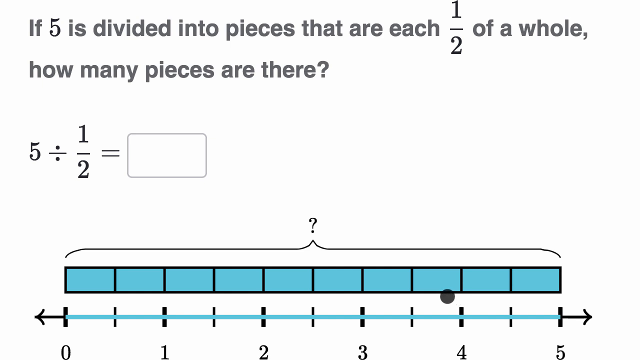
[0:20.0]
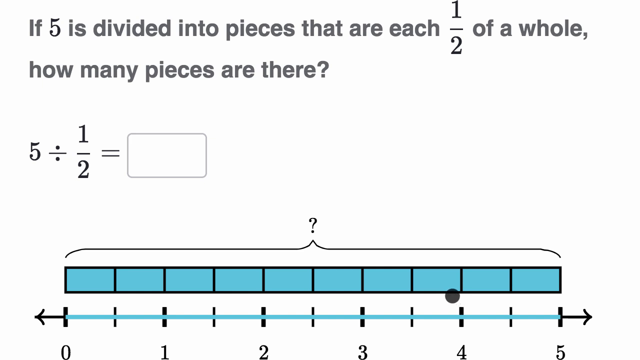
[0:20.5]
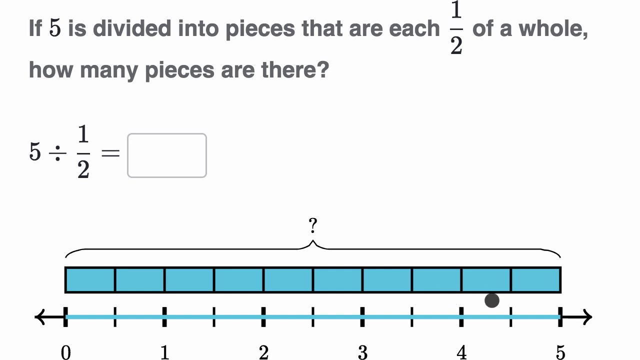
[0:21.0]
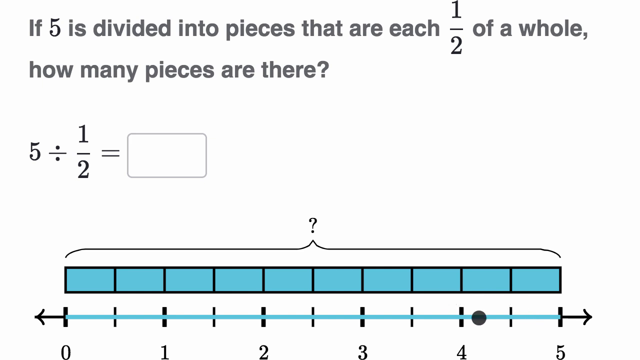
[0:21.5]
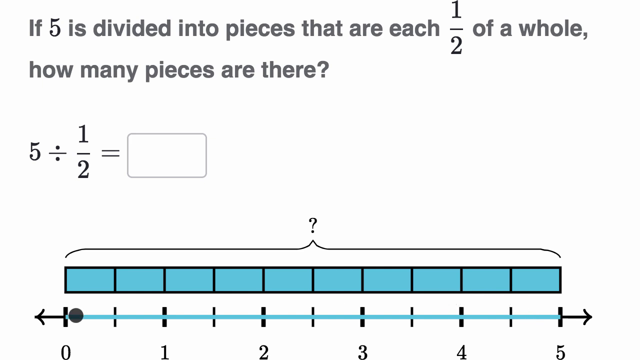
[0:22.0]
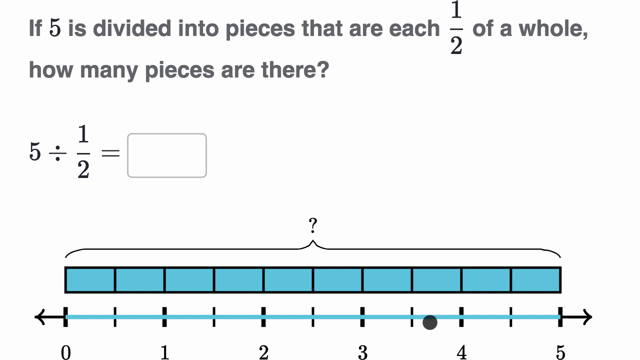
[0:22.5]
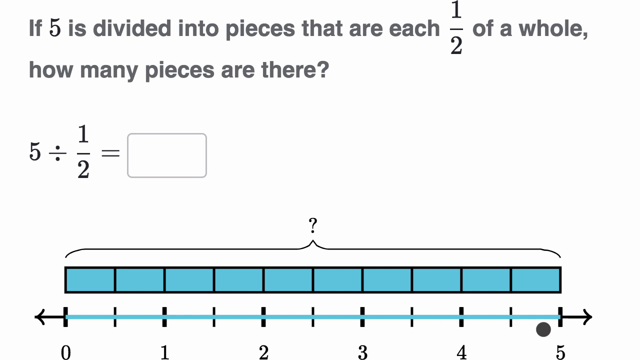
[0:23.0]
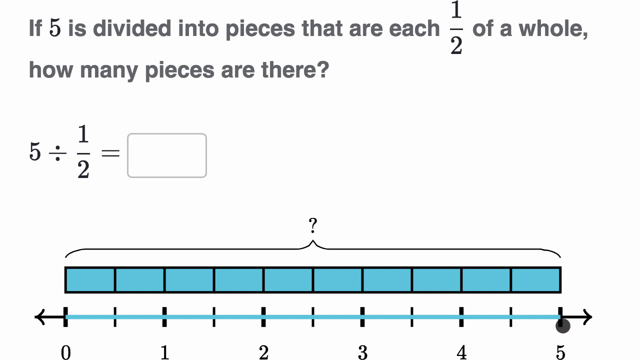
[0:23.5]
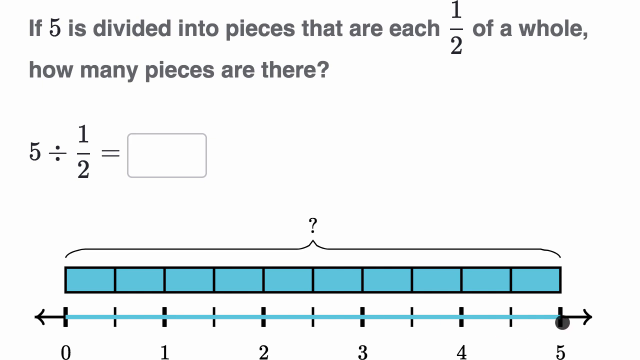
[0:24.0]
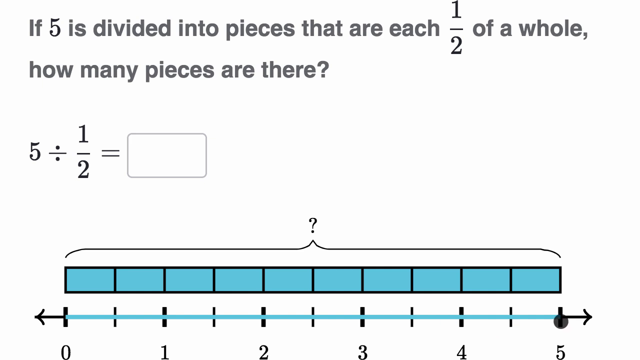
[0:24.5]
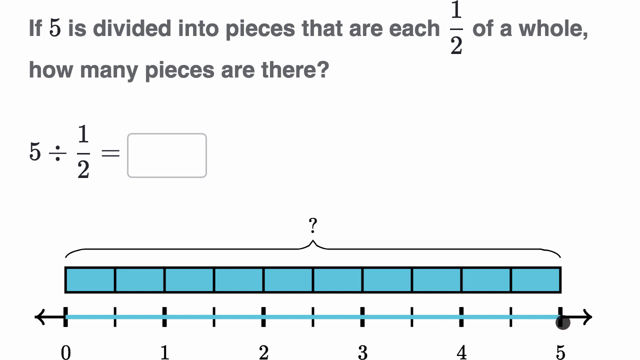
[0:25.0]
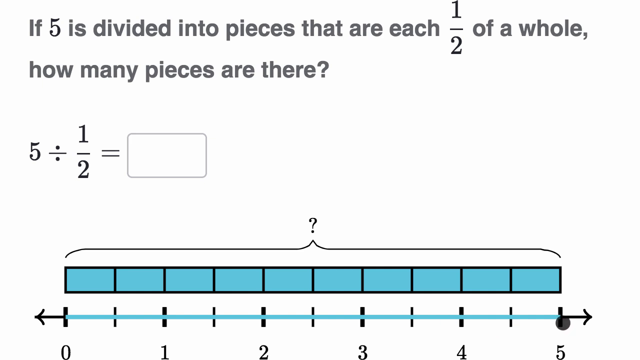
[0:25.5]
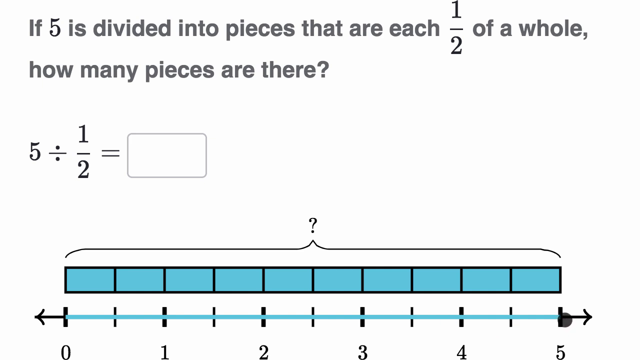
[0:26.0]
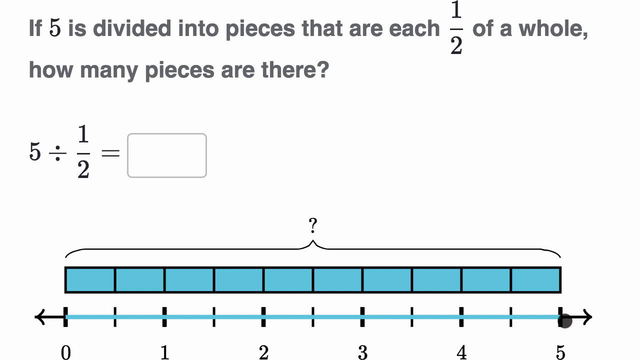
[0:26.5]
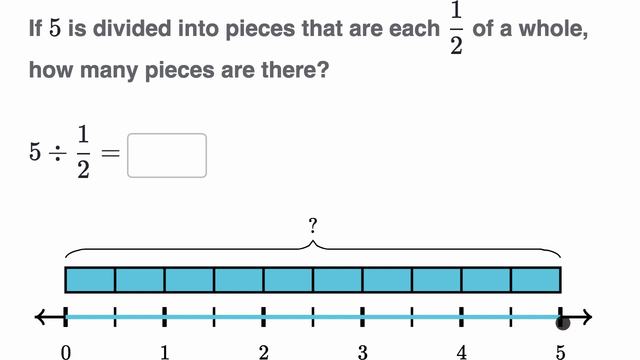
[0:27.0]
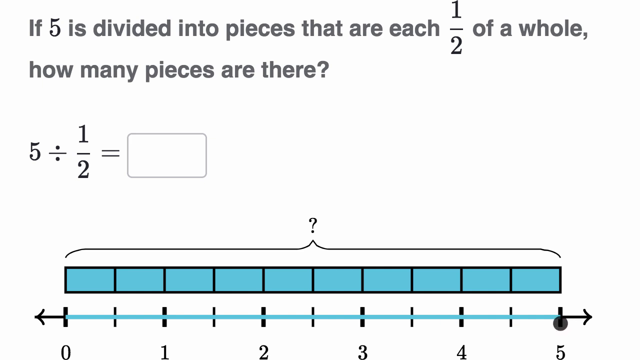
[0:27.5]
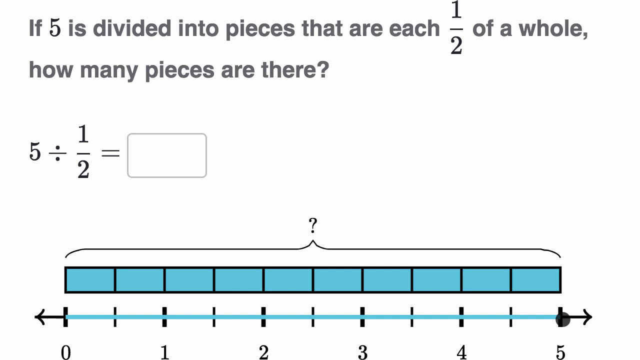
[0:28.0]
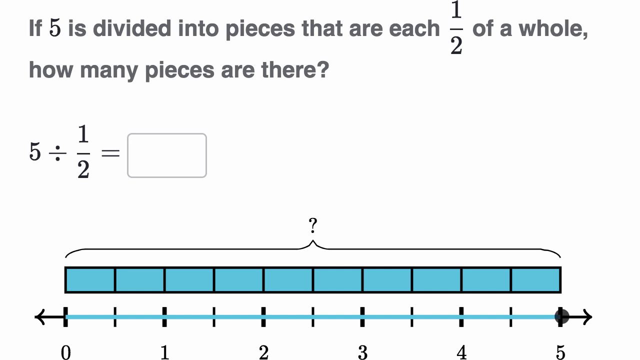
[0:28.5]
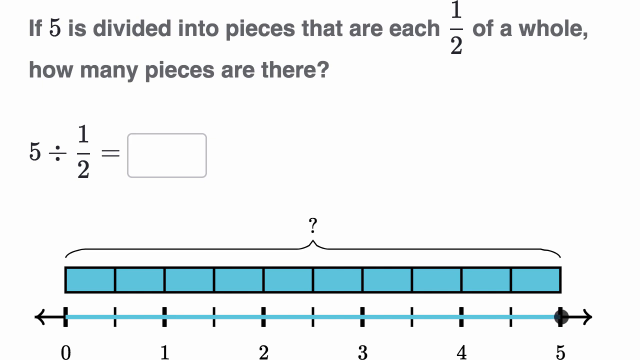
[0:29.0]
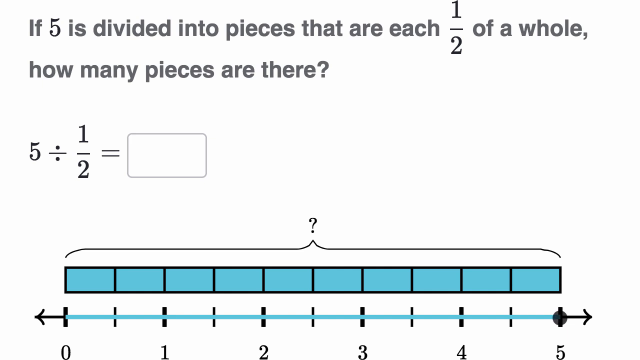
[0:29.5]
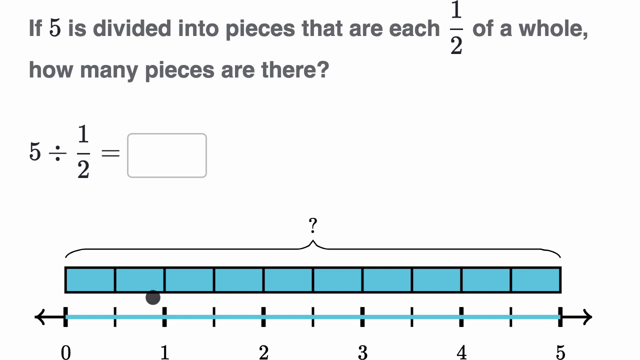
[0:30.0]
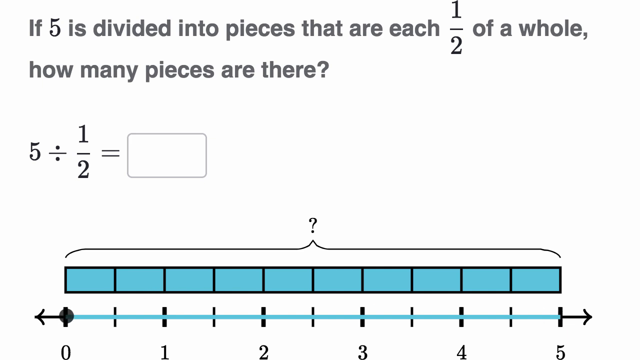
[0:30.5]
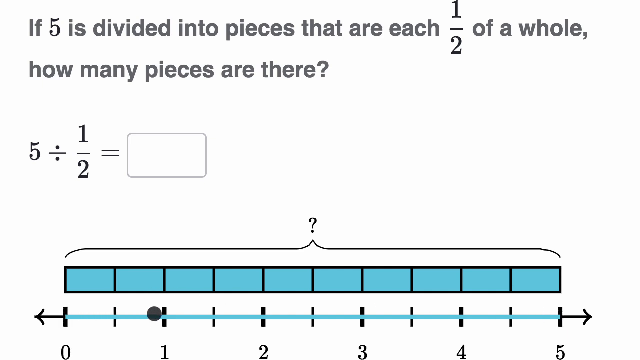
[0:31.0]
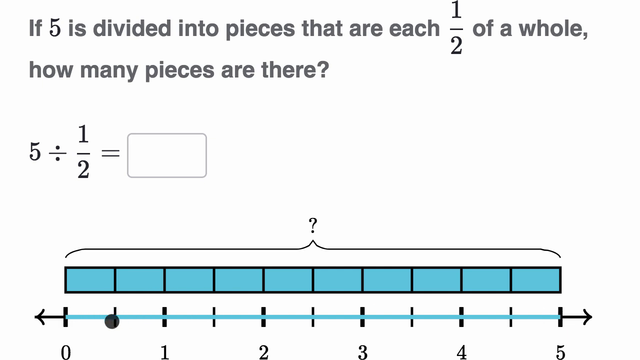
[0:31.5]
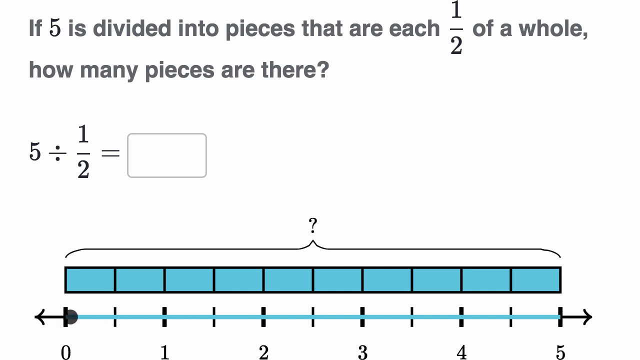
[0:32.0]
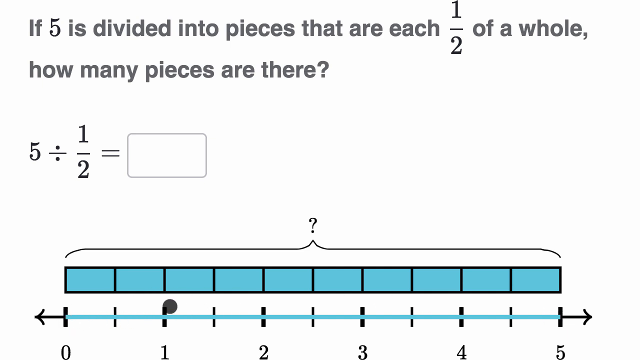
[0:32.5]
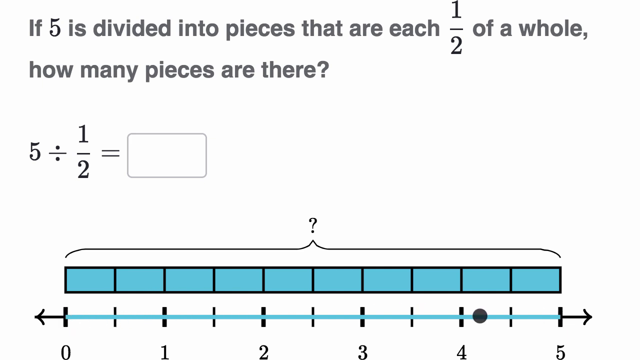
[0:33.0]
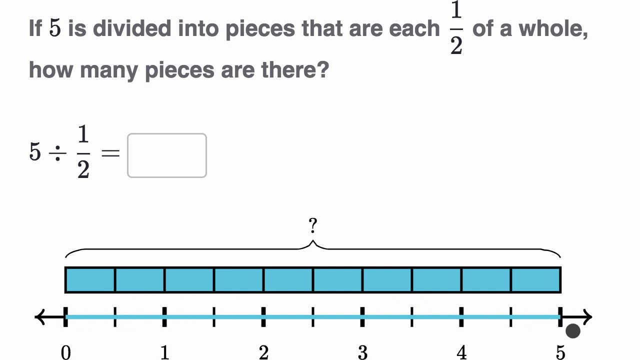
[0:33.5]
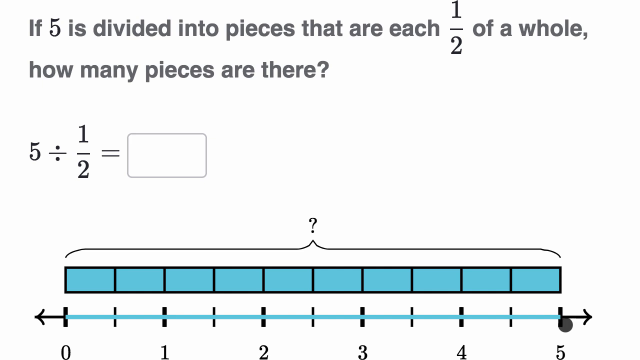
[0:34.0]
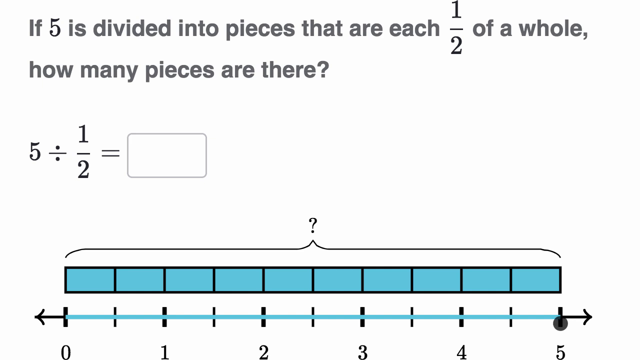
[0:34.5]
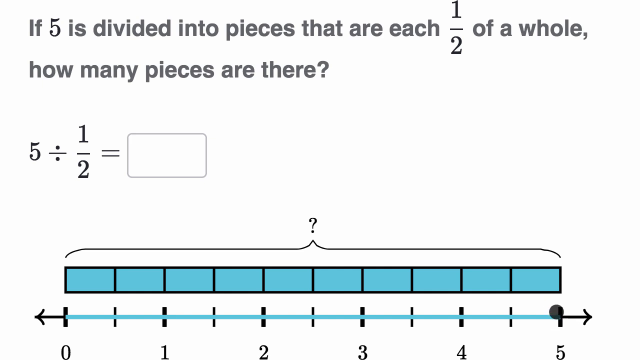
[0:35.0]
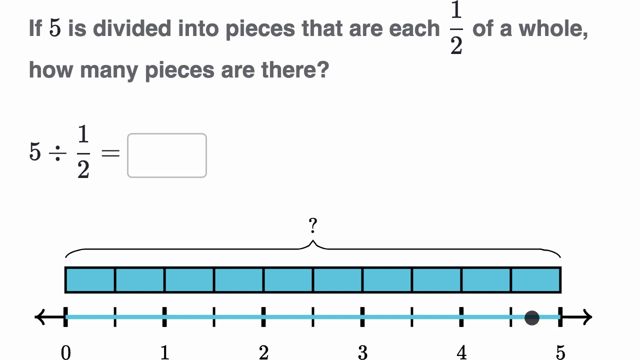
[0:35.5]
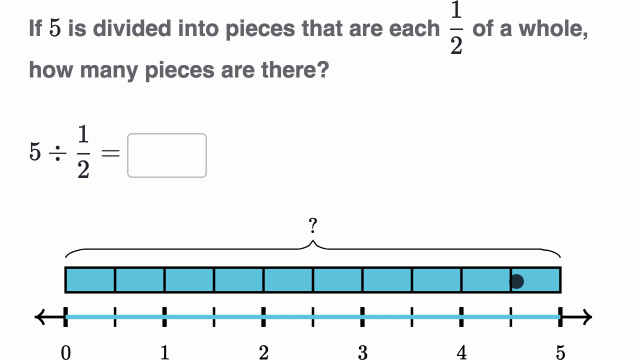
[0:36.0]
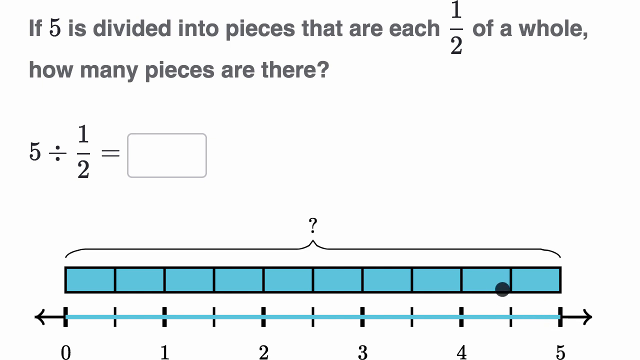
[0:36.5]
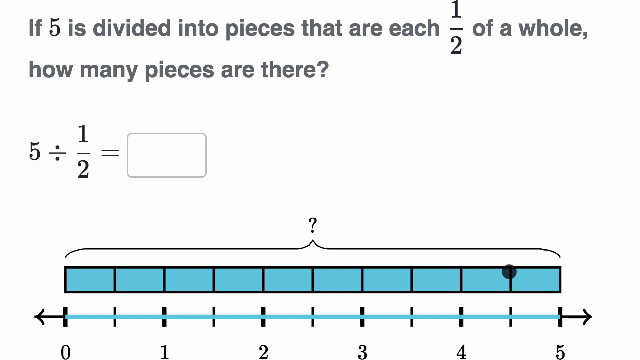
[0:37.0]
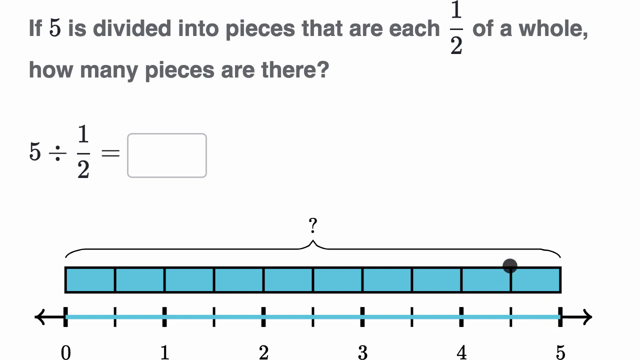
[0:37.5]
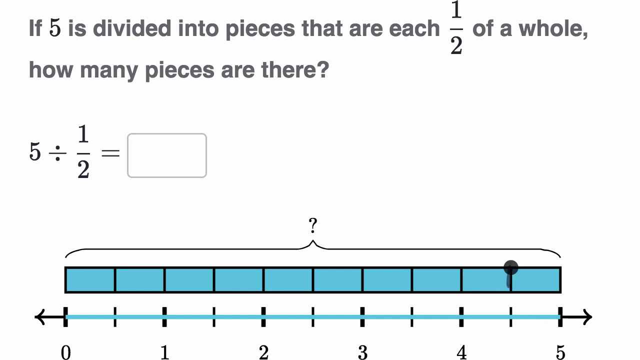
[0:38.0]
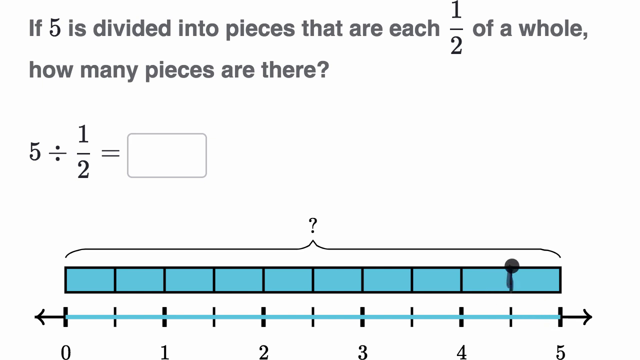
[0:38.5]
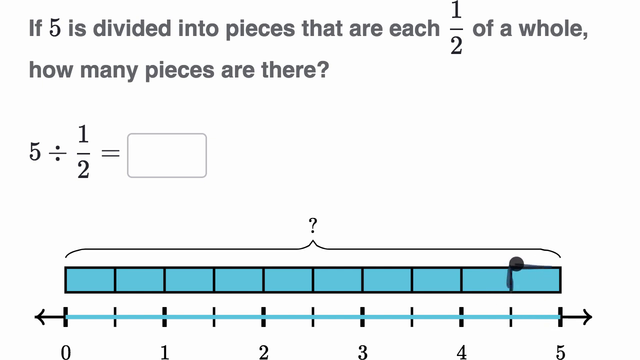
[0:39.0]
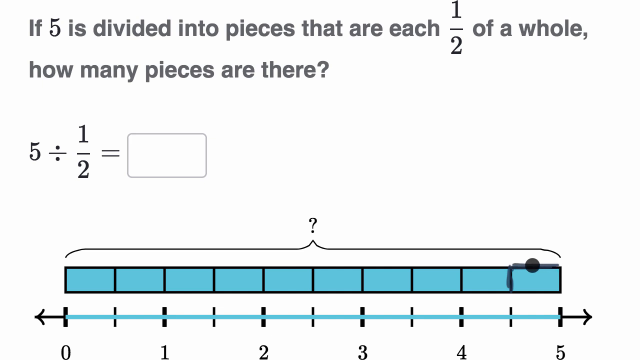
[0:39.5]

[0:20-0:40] On a white background are text at the top, an equation and an empty entry box in the middle, and a blue bar and a graph at the bottom. The grey text at the top reads "If 5 is divided into pieces that are each 1/2 of a whole, how many pieces are there?" Beneath it is a formula or equation in grey text, "5 ÷ by 1/2 =", with an empty text entry box to its right in the middle of the left side. Below that is a ? and a bracket that encompasses the space to the left and right over a horizontal blue bar divided into ten even sections. Beneath the bar is a graph with left and right arrows at its ends and the numbers 0, 1, 2, 3, 4 and 5 beneath it in black text. A grey circular cursor in the lower right moves down and to the right to the graph, left to the left side of the graph, then back right over the point marked 5. The black cursor then moves left to the point marked zero, then back right. The cursor moves up to the rightmost section of the blue bar and highlights the left and top lines or walls of that section.